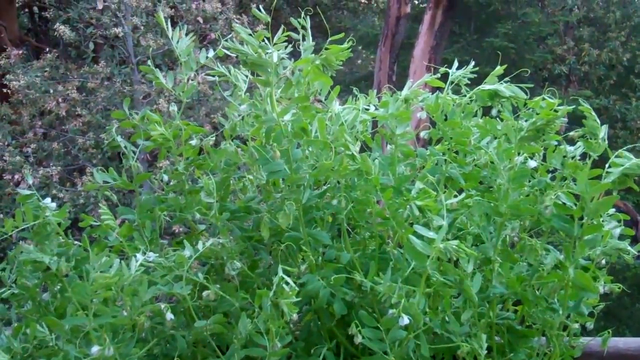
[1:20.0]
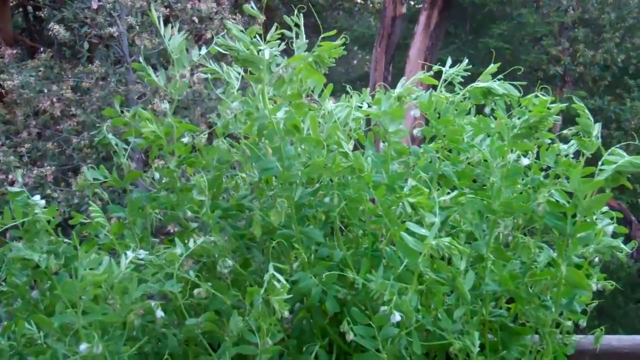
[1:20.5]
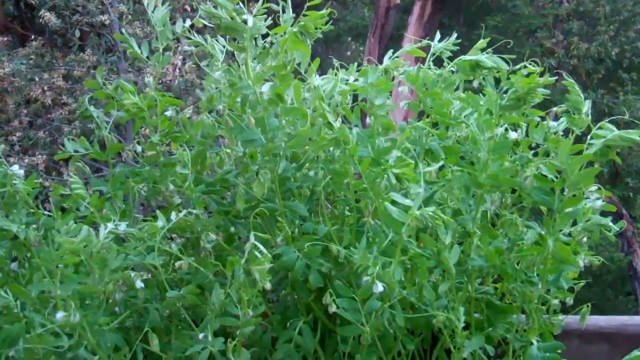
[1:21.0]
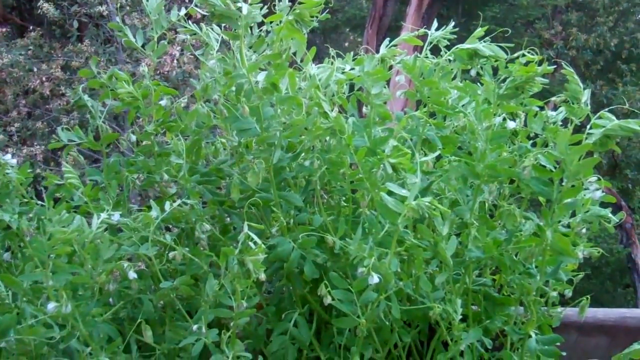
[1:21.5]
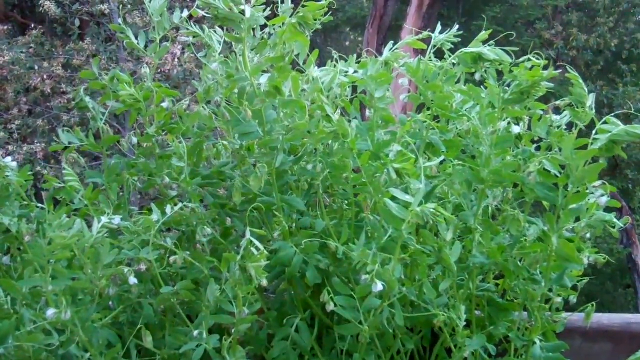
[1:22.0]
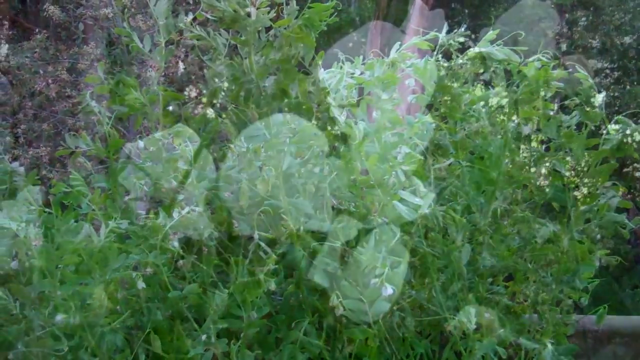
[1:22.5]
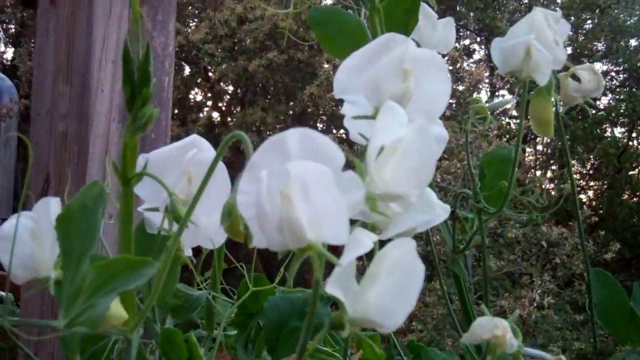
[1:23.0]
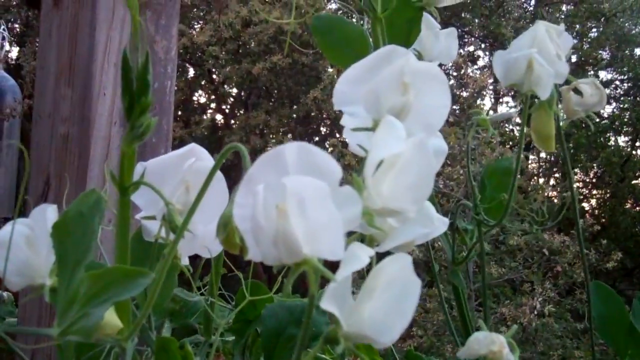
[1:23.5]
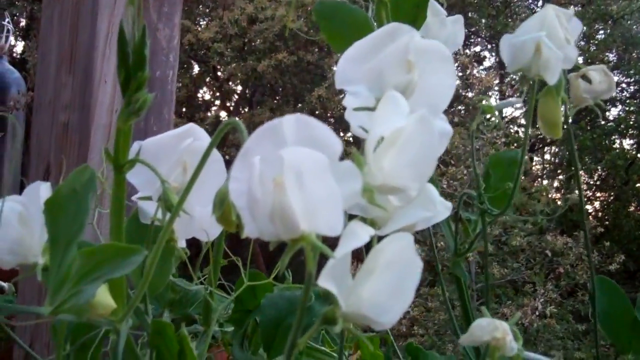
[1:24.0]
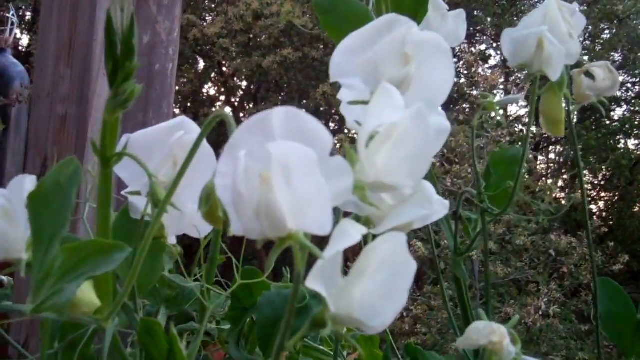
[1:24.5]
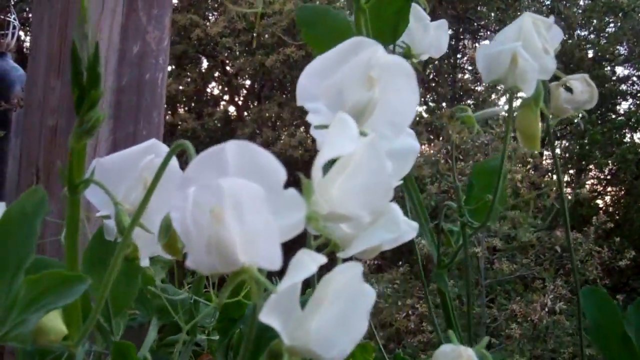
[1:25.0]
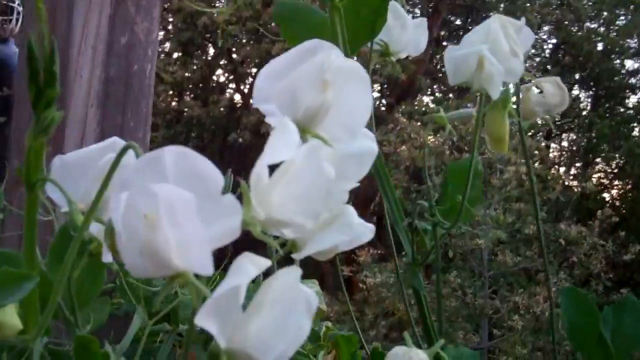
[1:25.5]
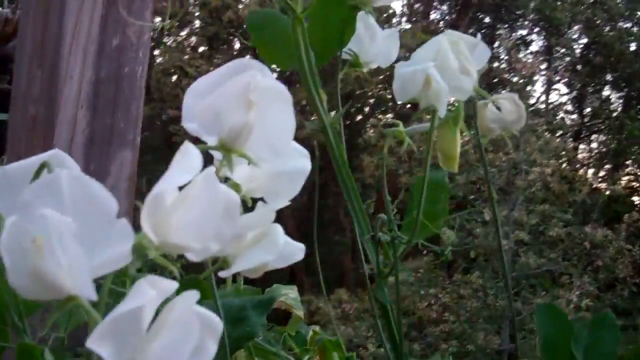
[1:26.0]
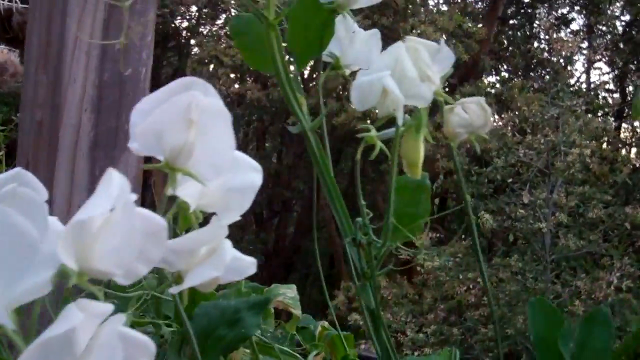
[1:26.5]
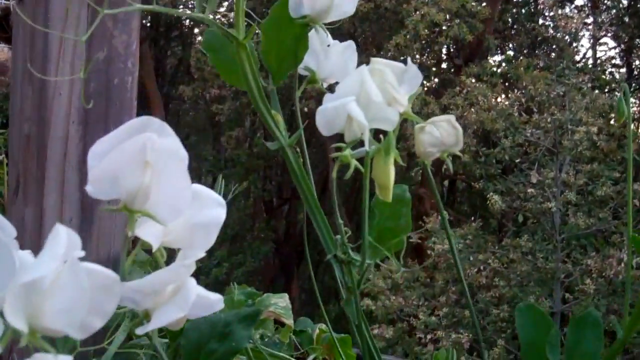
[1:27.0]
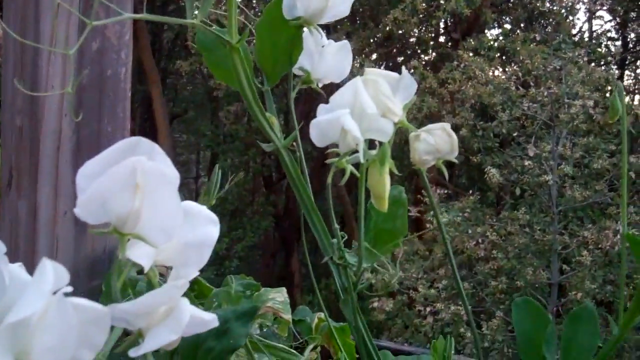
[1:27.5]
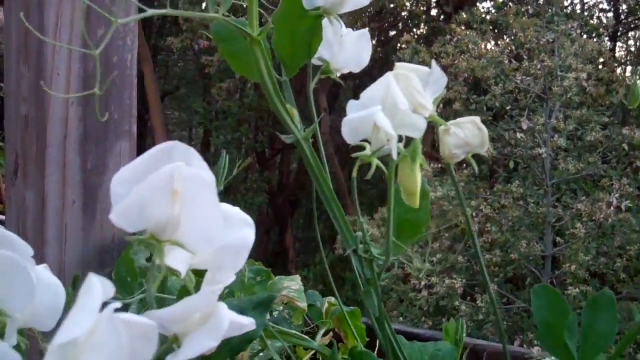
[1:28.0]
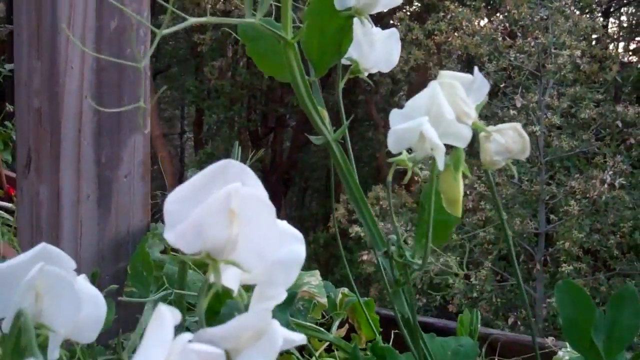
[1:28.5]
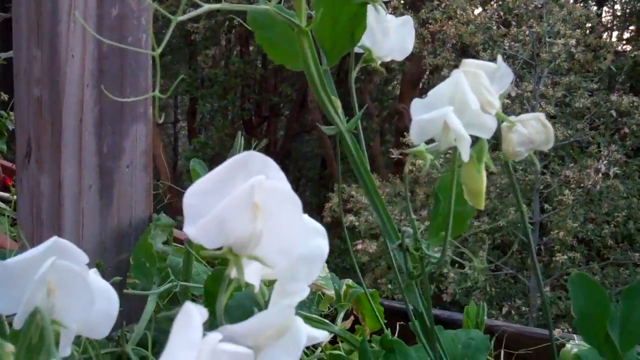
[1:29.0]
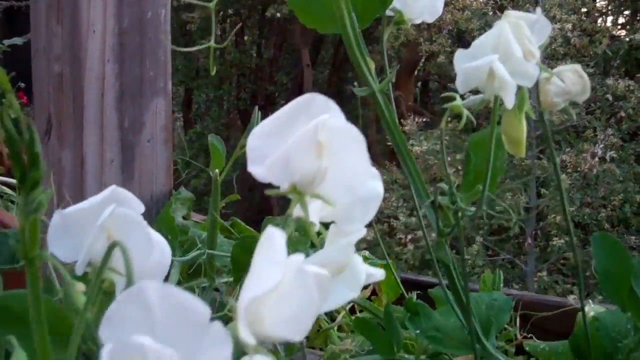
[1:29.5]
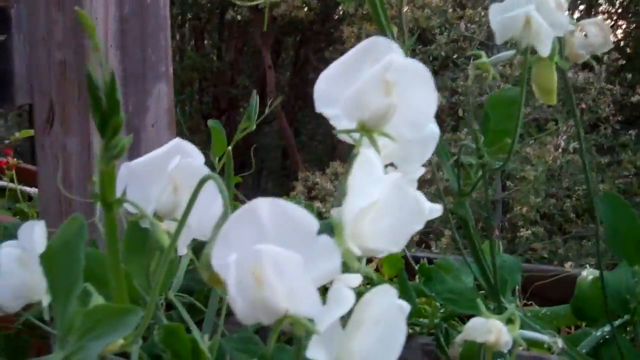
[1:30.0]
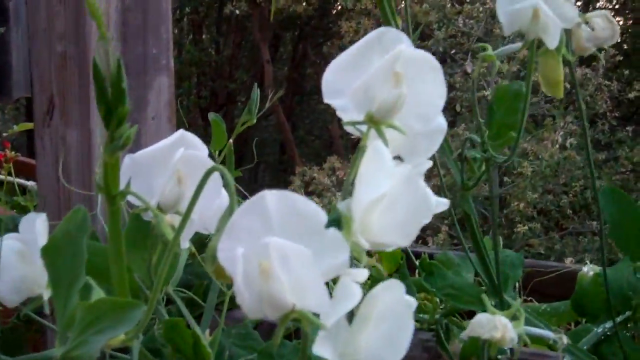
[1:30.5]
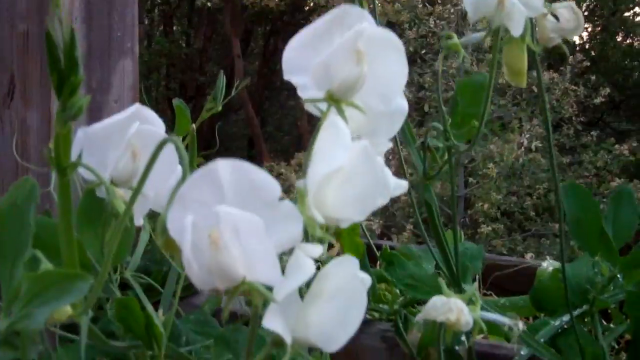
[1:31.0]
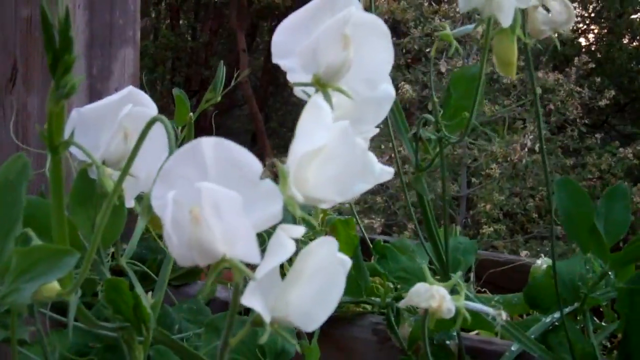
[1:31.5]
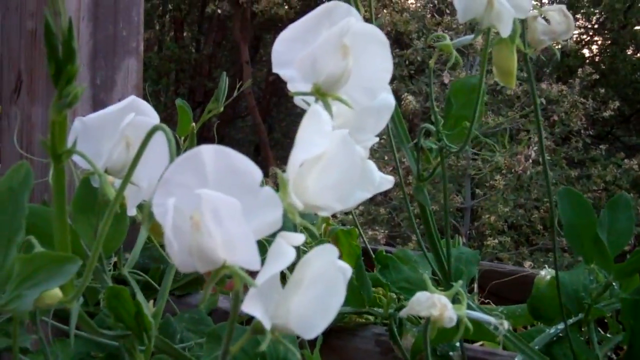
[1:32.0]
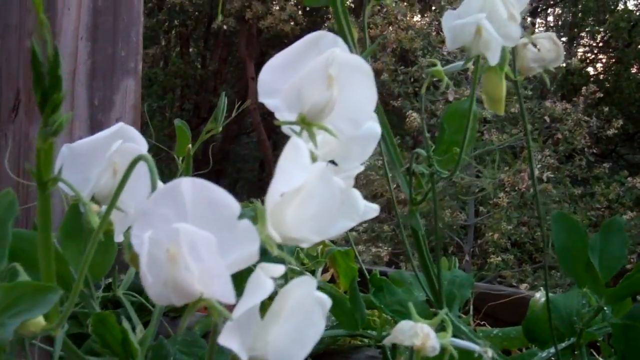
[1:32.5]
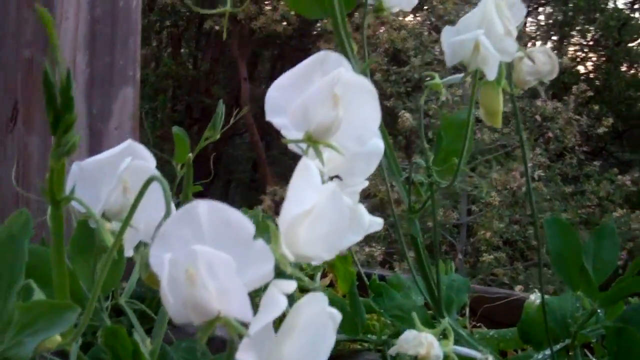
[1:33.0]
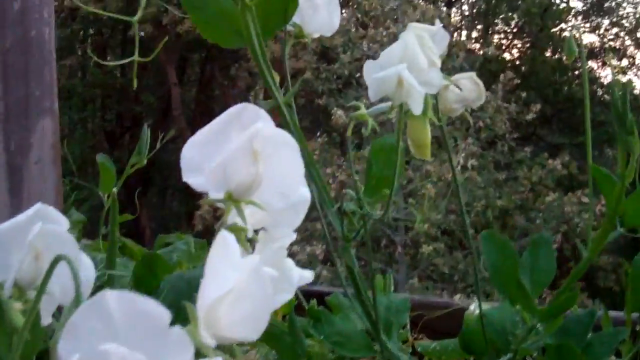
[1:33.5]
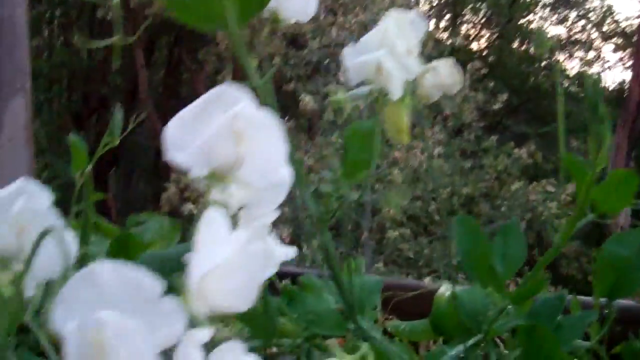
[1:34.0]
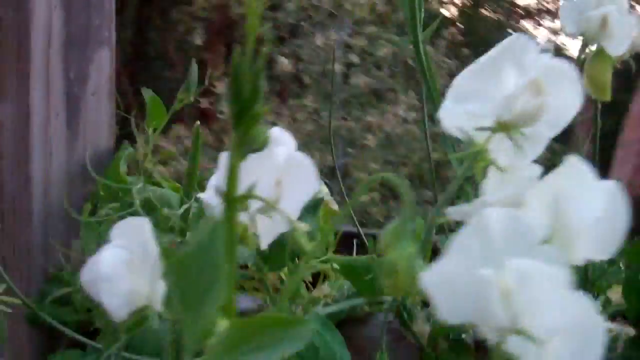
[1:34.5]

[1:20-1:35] The man finishes his examination of the potted plant. The scene then switches to a shot of various white flowers, quite possibly orchids of some sort. The camera pans slightly up and down to get various angles. There appear to be nine large white flowers. They seem to be doing quite well, with very white, pure petals and no signs of decay or aging. At the very end, the camera starts panning toward the left.